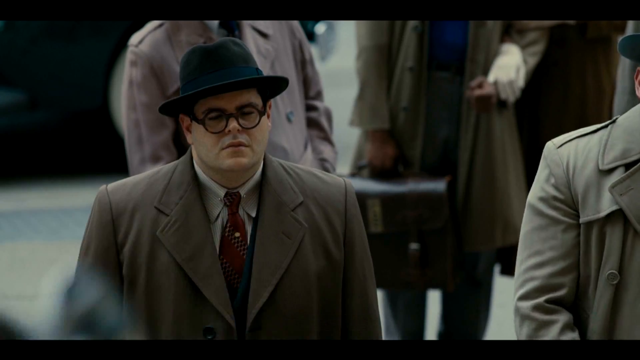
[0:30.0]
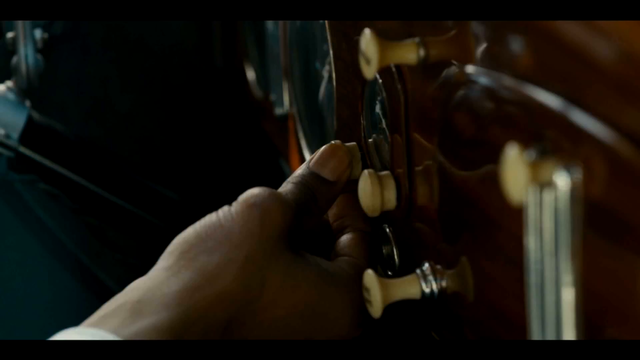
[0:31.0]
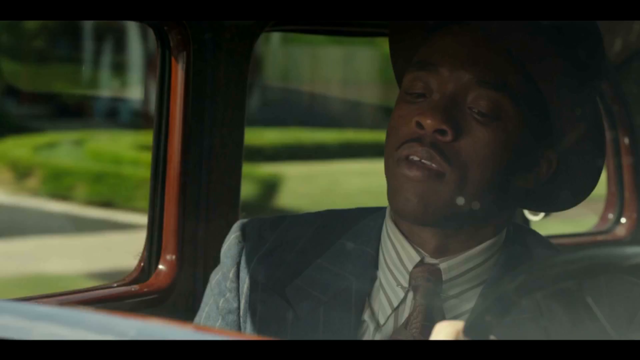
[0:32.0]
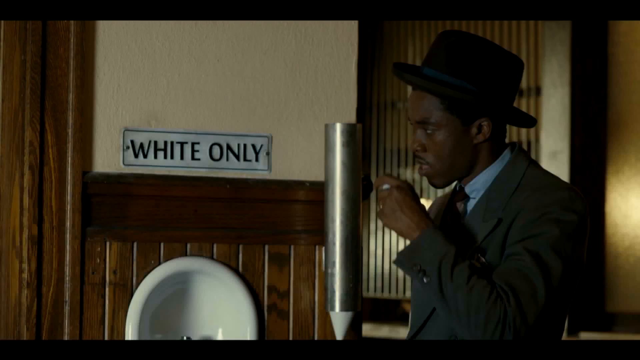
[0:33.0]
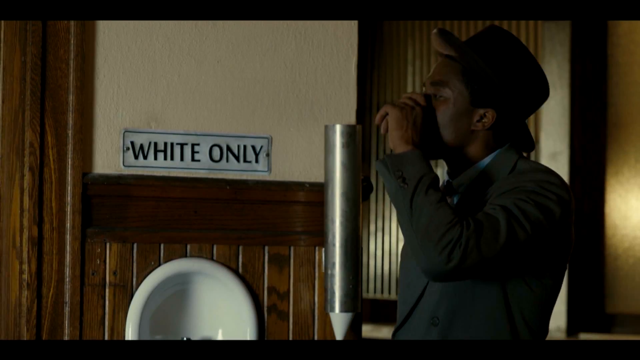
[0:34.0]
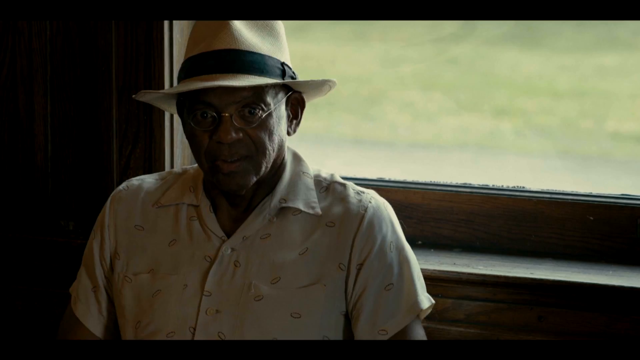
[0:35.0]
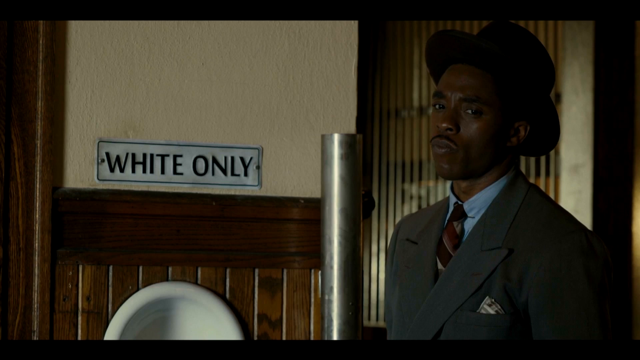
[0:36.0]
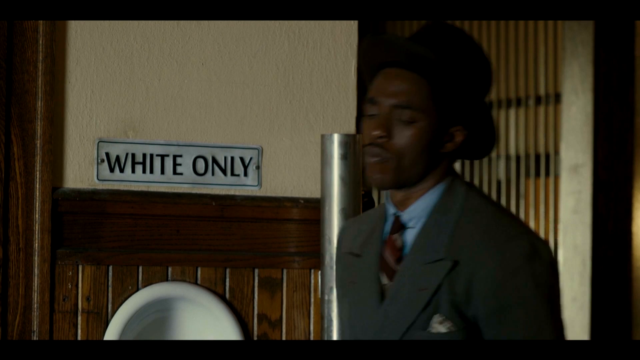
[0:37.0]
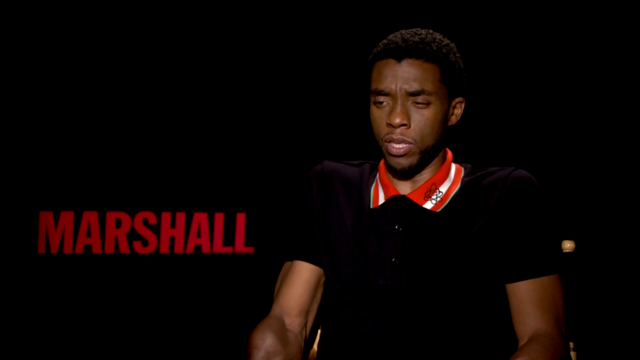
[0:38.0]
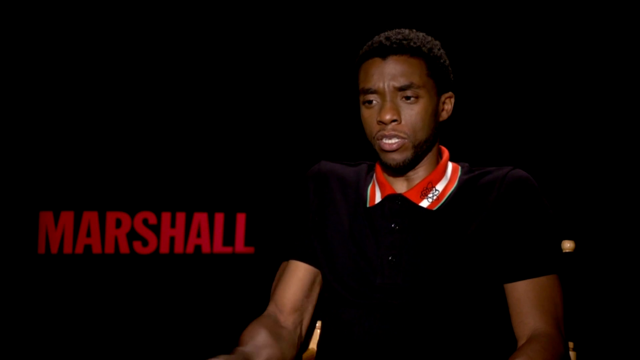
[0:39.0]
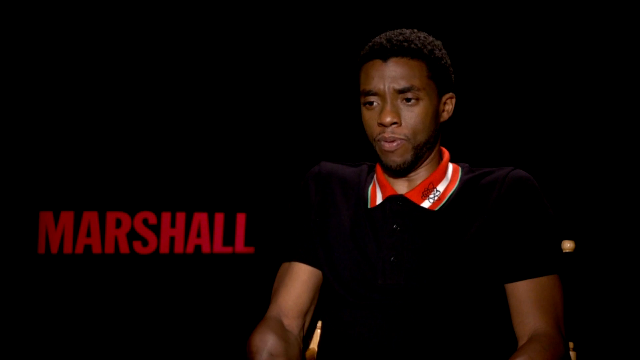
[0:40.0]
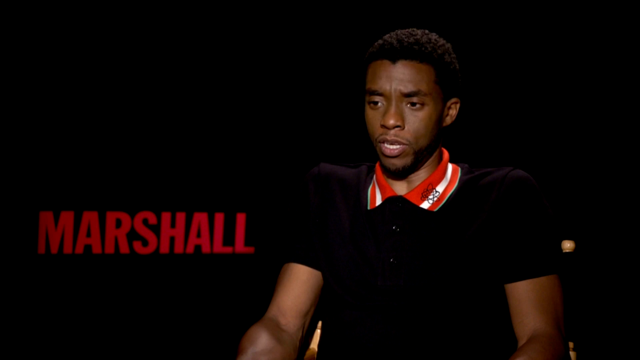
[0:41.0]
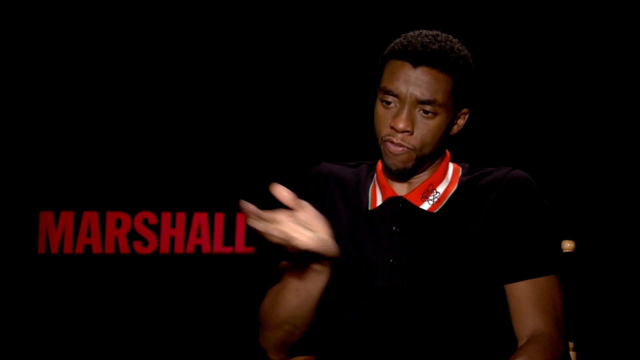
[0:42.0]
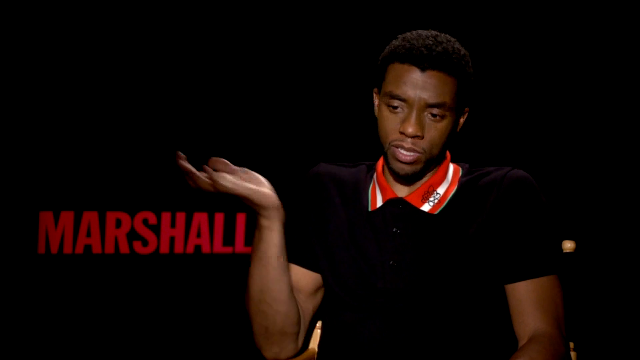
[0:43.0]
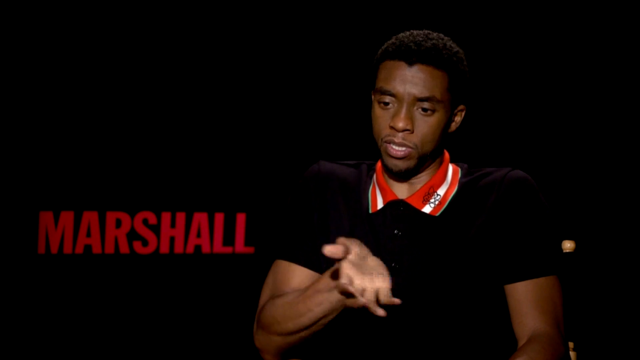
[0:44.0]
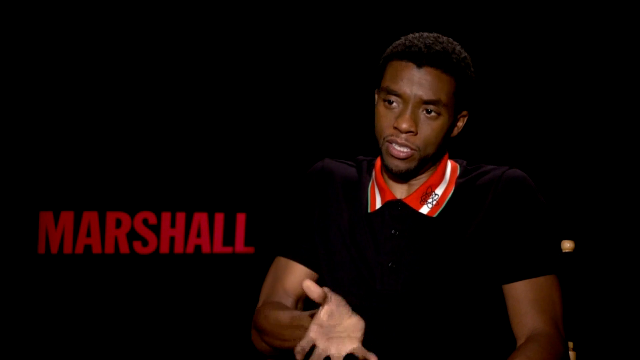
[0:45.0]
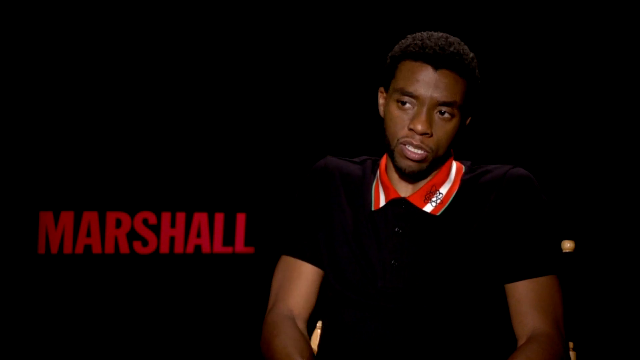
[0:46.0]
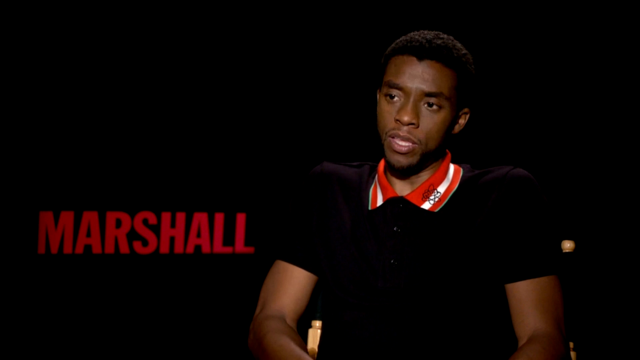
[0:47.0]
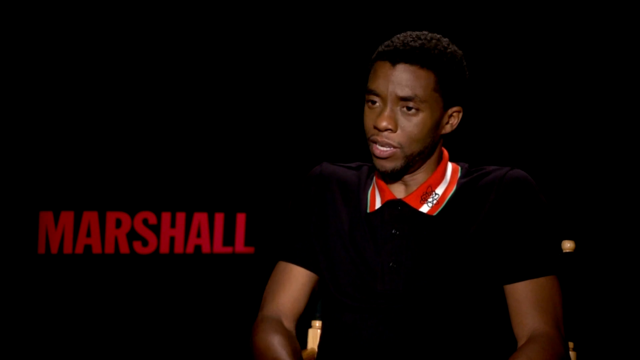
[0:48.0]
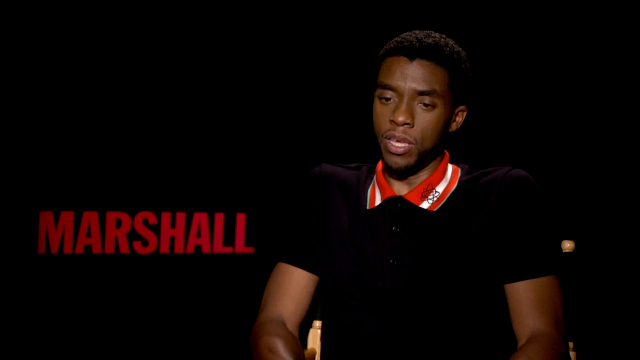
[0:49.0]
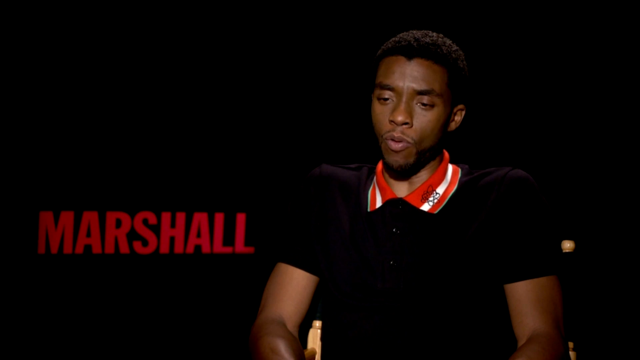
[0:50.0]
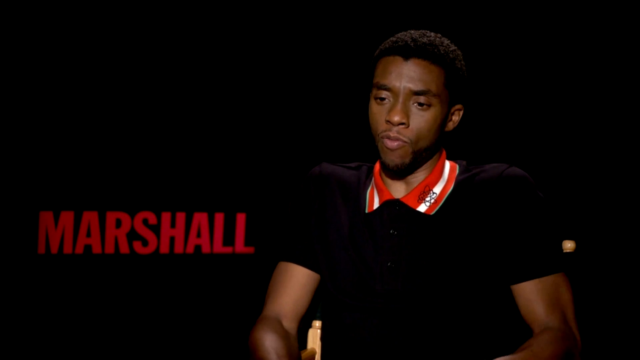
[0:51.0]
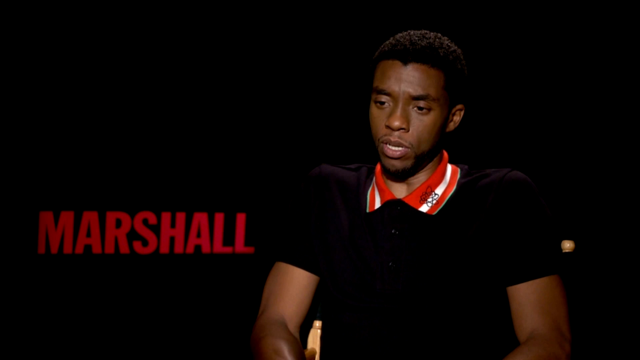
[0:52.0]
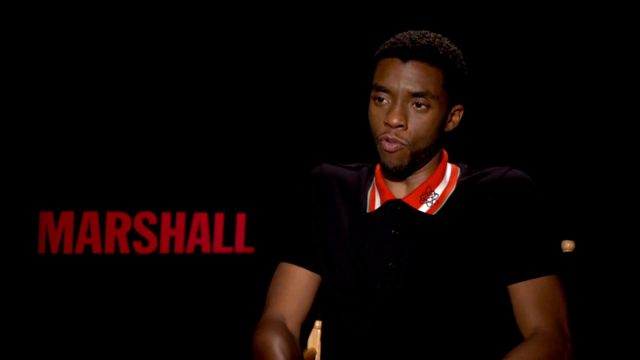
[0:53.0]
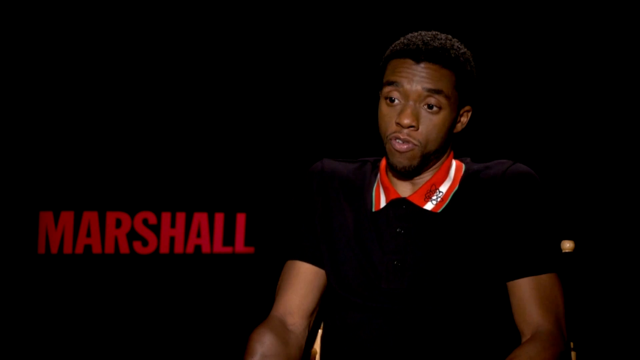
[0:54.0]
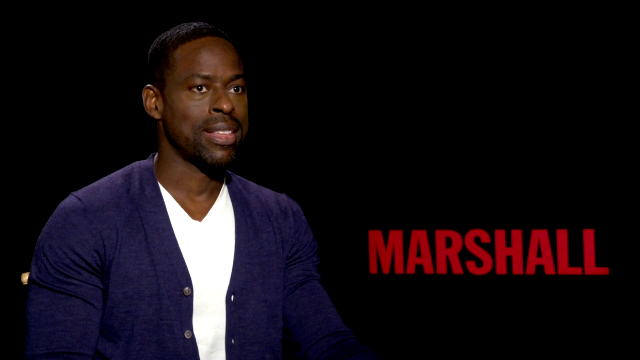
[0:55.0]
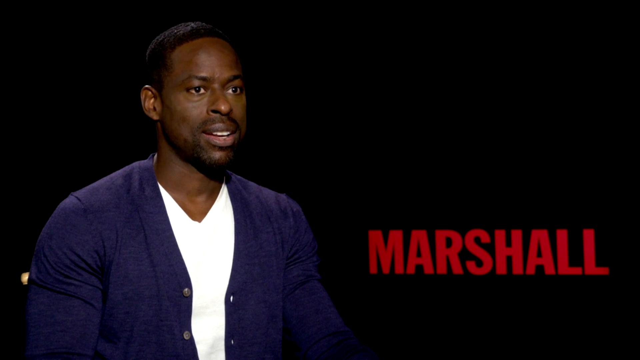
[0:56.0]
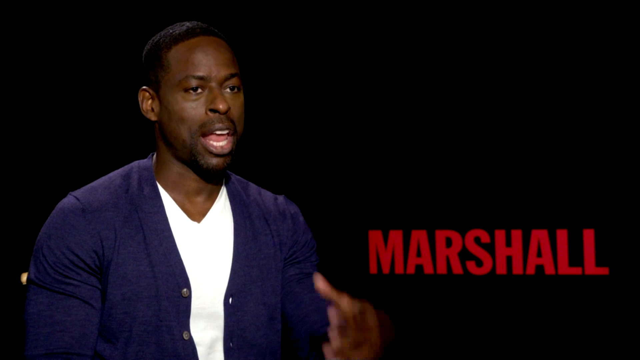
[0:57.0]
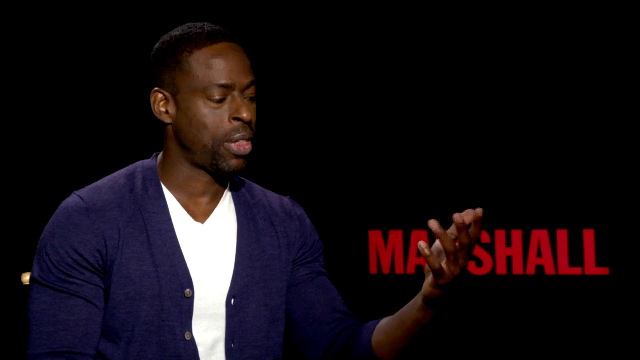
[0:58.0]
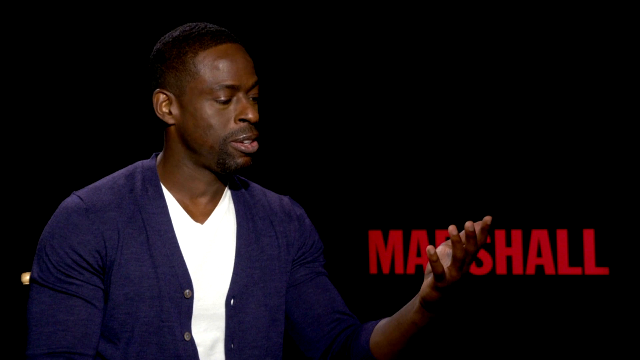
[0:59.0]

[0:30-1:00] More of the movie plays, and it appears to depict a time of segregation between black and white people. In one scene the main character drinks something, possibly coffee or water, and a water fountain is labeled "white only". The same actor is shown again talking; he has very short black hair, a clean-cut look, and wears a black shirt with a red and white striped collar. Another man, on the left, wears a loosely buttoned purple vest over a white shirt and talks as well. He holds up his left hand and looks at it, possibly referring to skin color.